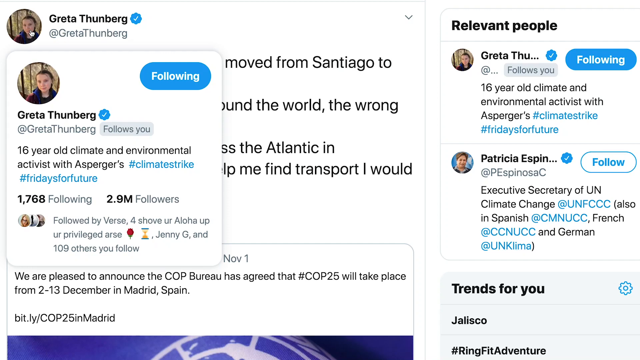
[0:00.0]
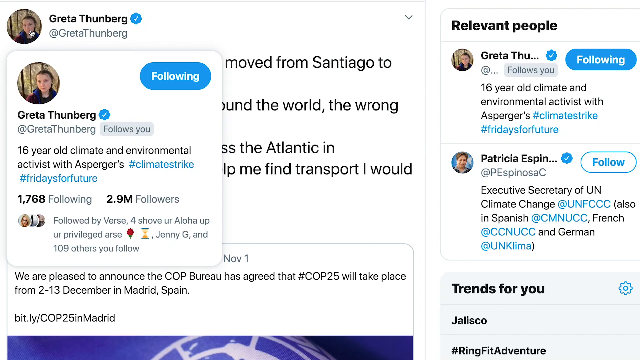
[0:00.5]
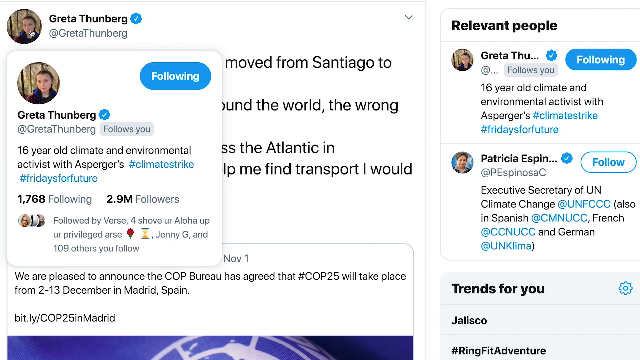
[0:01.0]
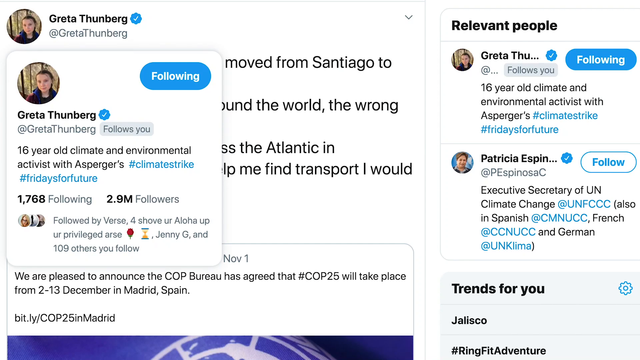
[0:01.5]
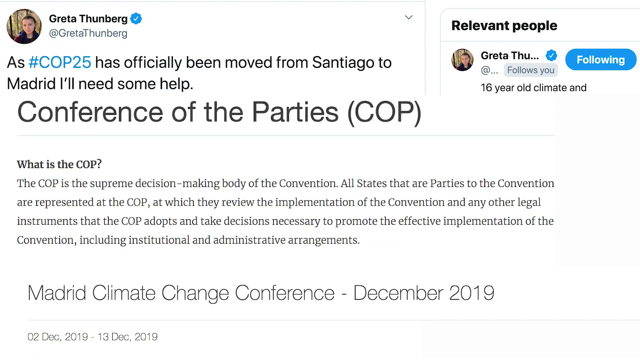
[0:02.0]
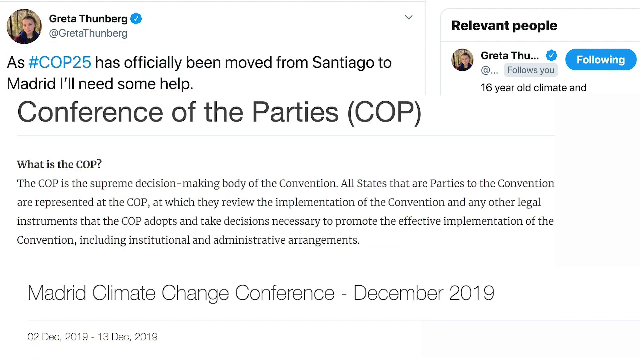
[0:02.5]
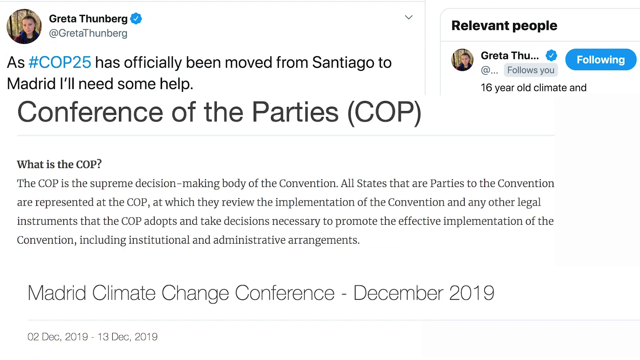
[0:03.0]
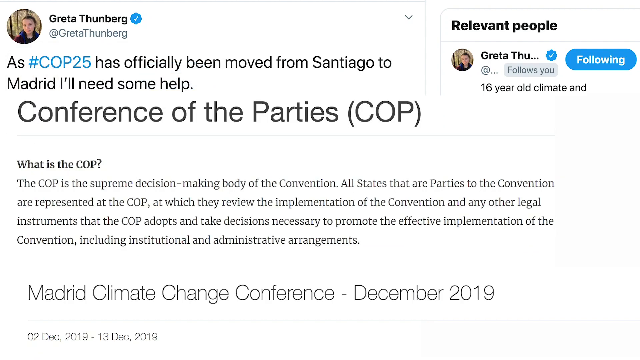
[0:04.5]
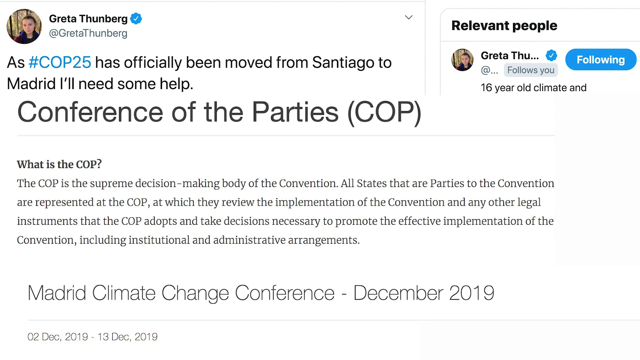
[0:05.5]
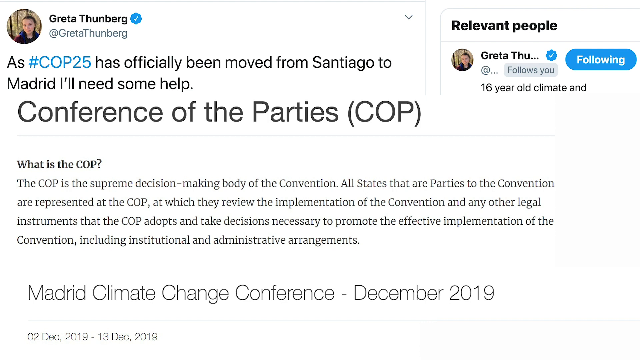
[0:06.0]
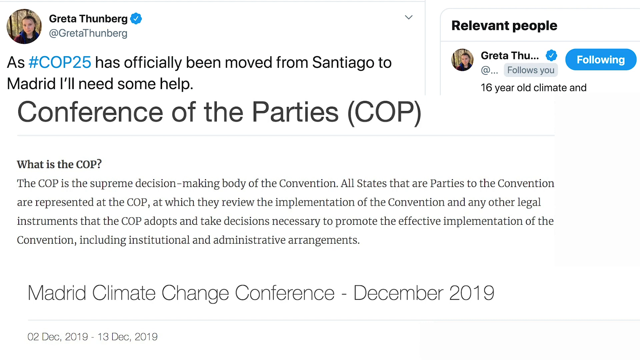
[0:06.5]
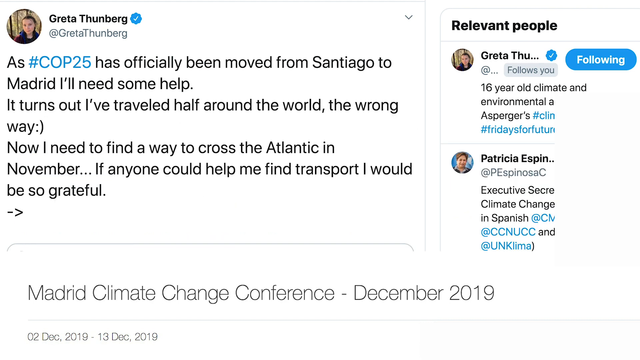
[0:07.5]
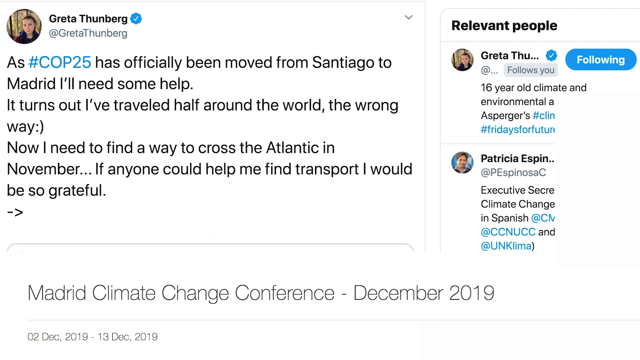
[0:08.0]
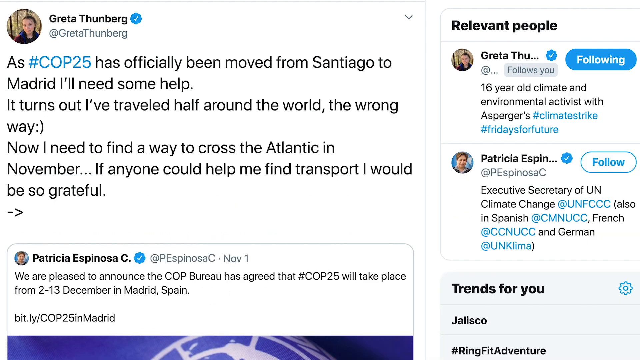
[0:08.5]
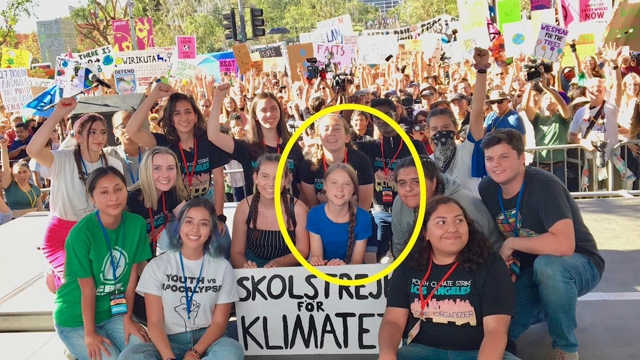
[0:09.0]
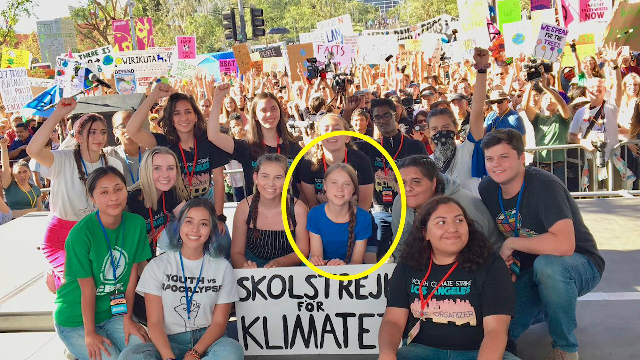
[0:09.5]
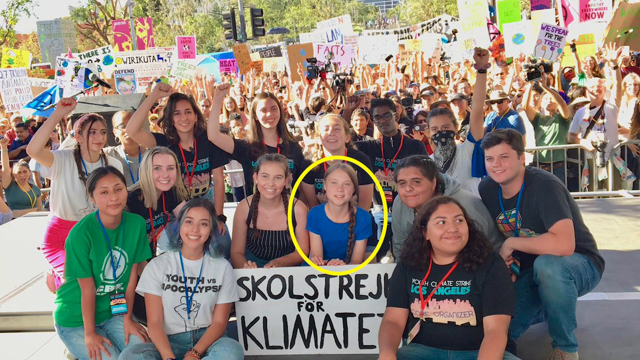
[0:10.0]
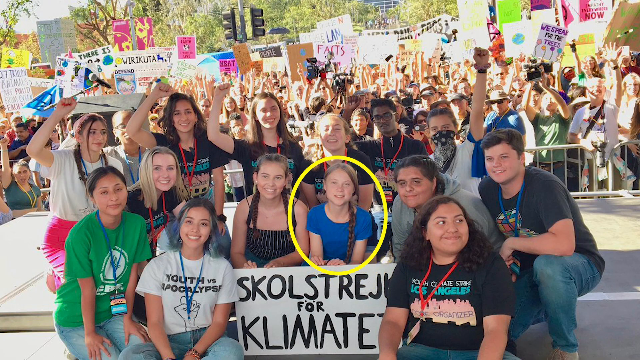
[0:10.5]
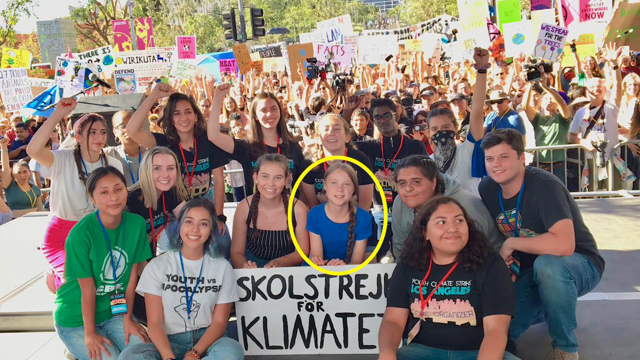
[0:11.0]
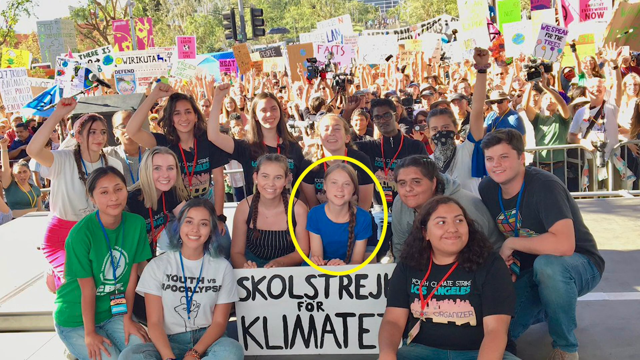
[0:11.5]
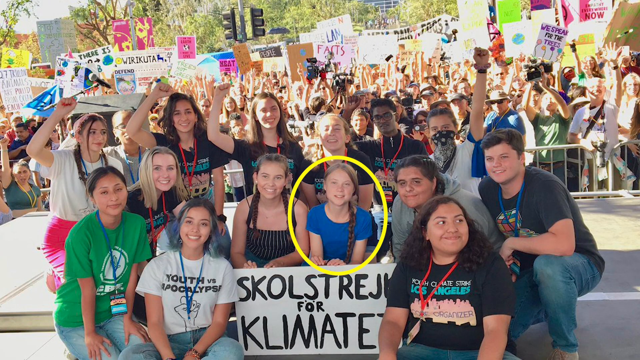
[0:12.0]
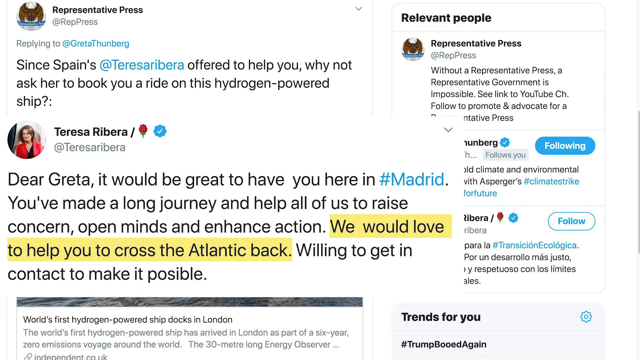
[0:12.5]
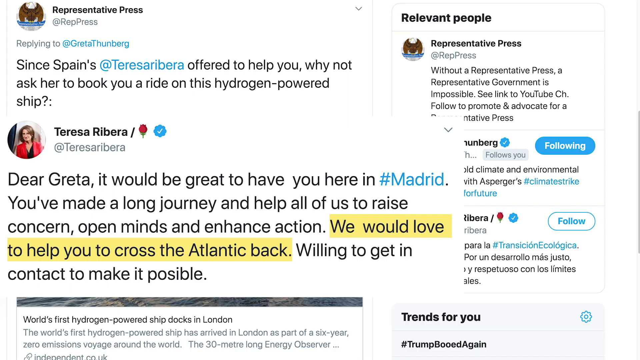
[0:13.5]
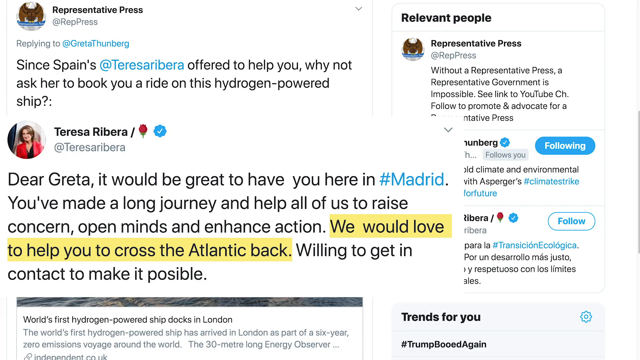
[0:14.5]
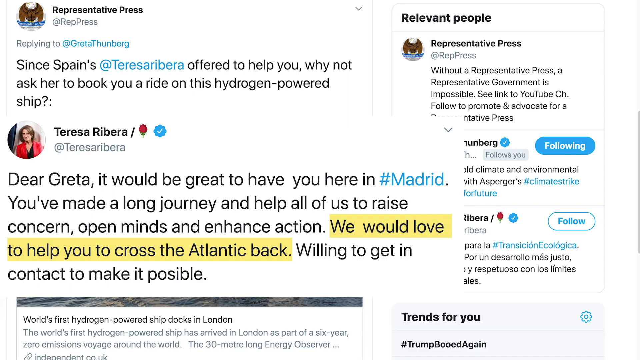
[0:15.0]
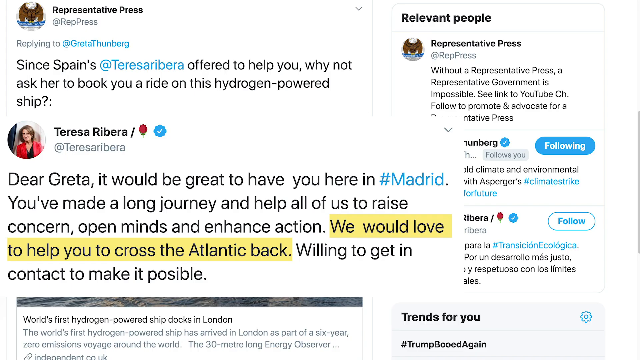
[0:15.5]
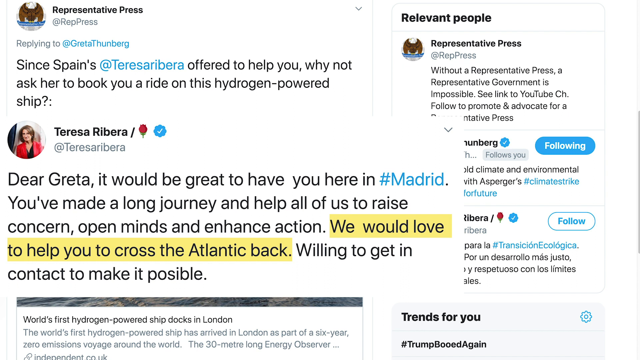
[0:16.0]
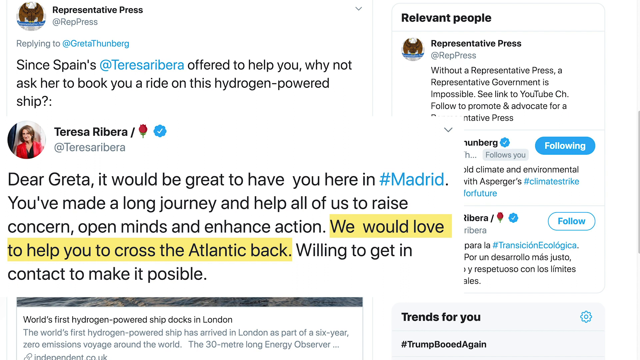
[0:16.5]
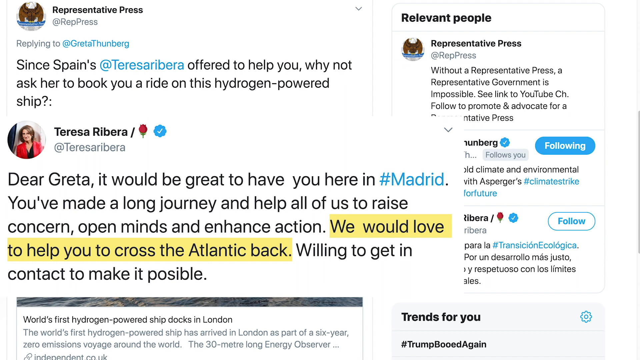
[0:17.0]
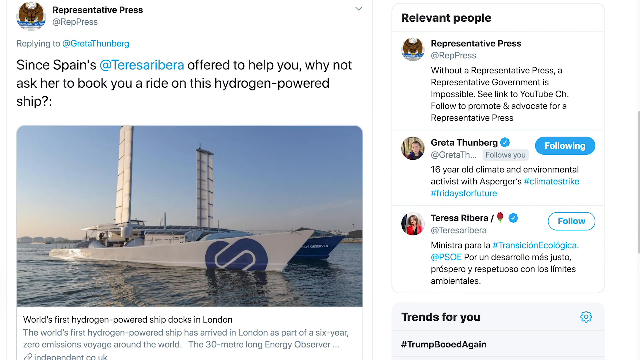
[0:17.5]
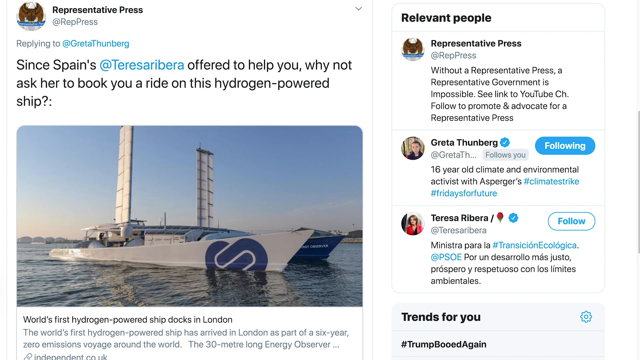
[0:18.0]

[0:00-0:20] What looks like Greta Thunberg's Twitter page appears, showing "Greta Thunberg, 16-year-old climate and environmental activist with Asperger's." The video cuts to an article about COP, the Conference of the Parties, answering the question "what is the COP?" with "The COP is a supreme decision-making body of the convention," along with "Madrid Climate Change Conference." A post by Greta Thunberg reads "as COP25 has officially been moved from Santiago to Madrid, I'll need some help." Next comes an image of Greta Thunberg with a group of younger people, apparently also climate activists, in front of a larger group of activists all holding signs outdoors at a sunny daytime event; there is a yellow circle on the image. Then another Twitter post appears from a woman, Teresa Rivera, replying to Greta and saying they would love to help her across the Atlantic.